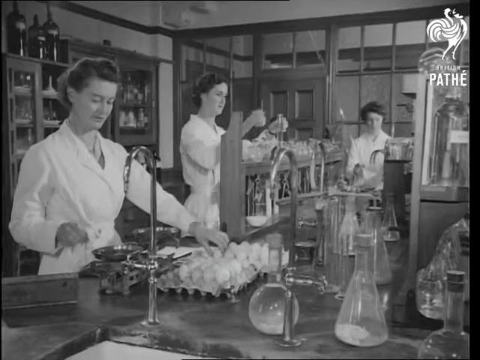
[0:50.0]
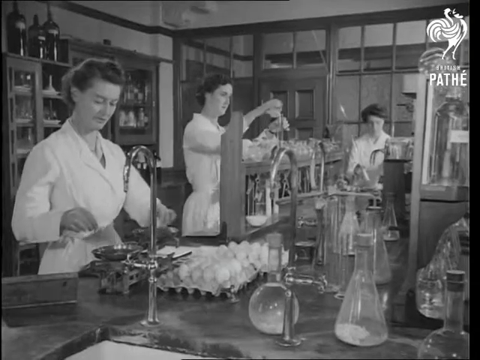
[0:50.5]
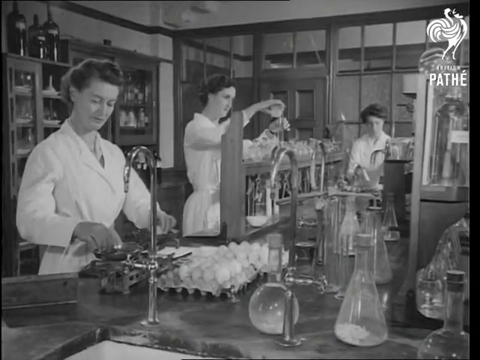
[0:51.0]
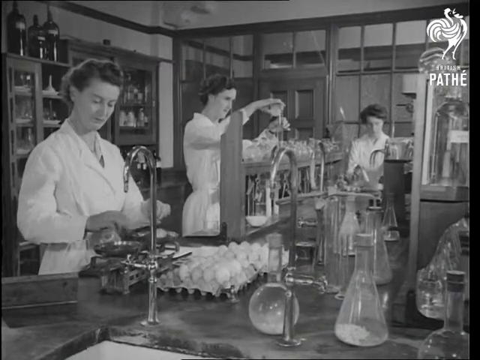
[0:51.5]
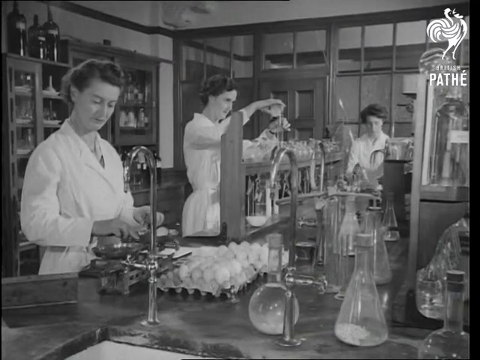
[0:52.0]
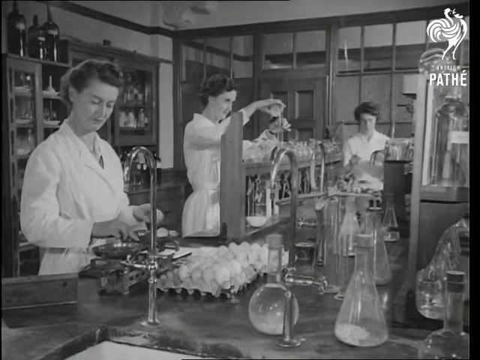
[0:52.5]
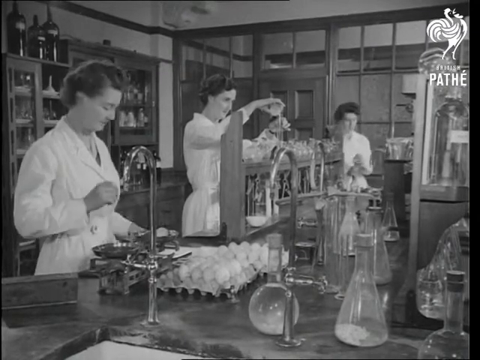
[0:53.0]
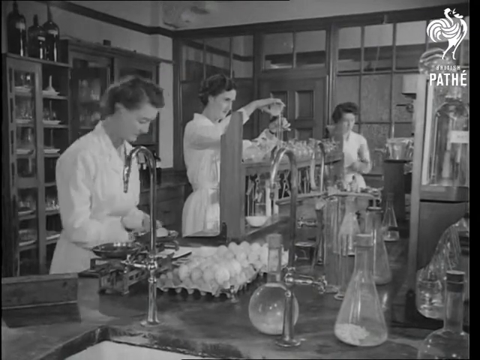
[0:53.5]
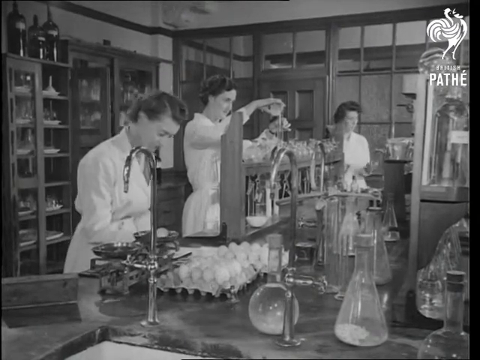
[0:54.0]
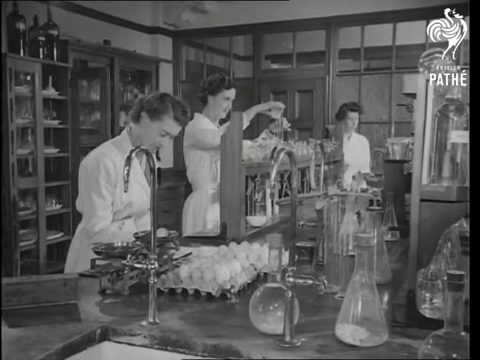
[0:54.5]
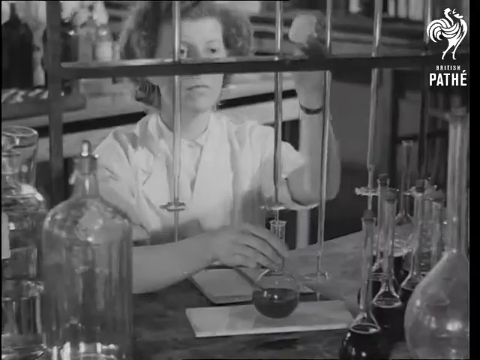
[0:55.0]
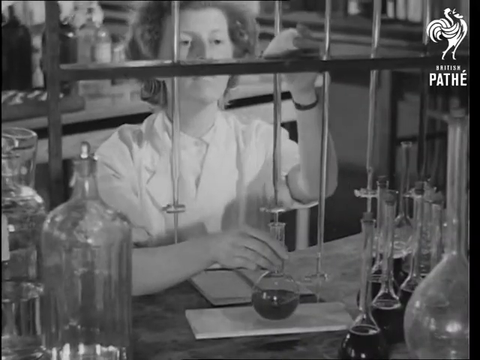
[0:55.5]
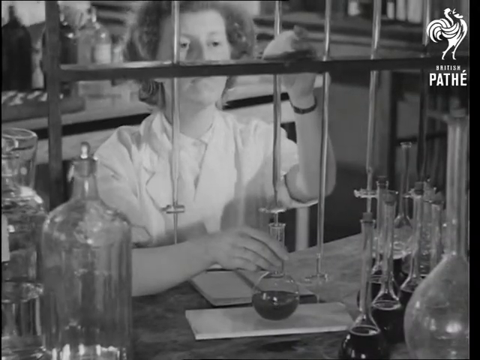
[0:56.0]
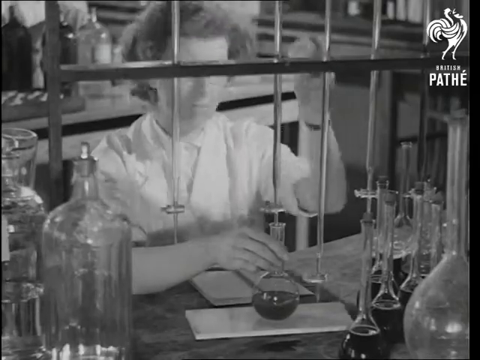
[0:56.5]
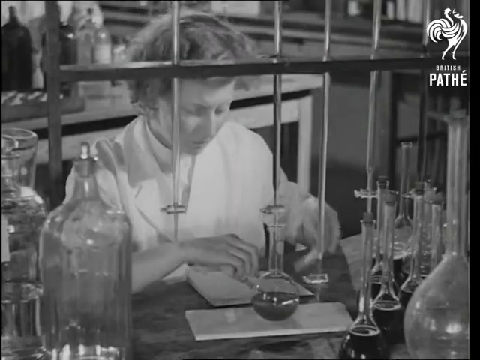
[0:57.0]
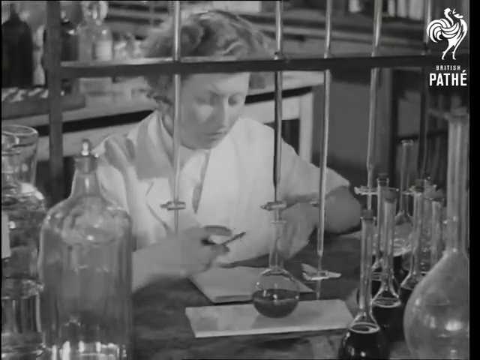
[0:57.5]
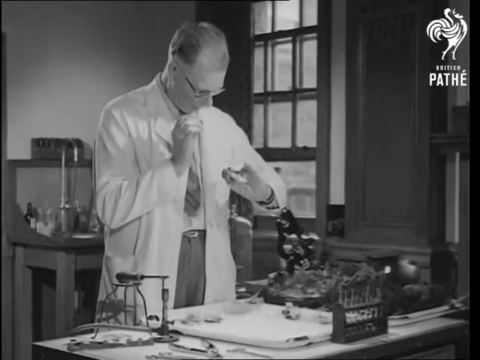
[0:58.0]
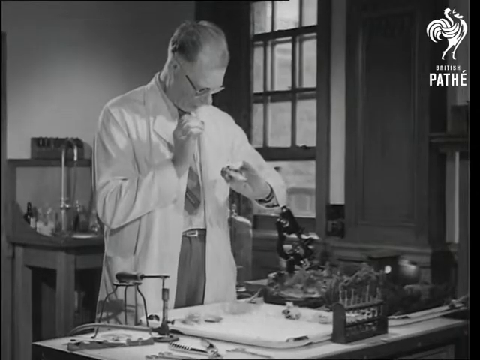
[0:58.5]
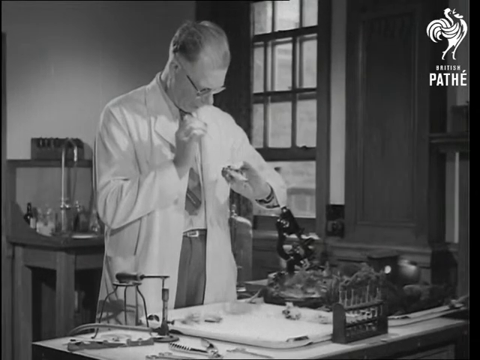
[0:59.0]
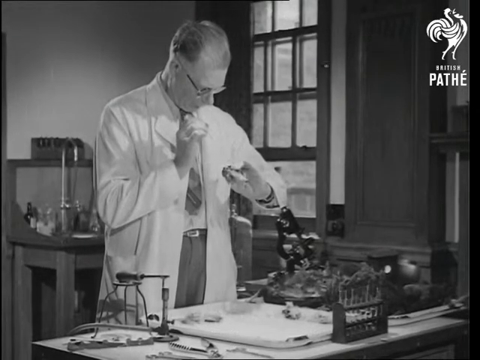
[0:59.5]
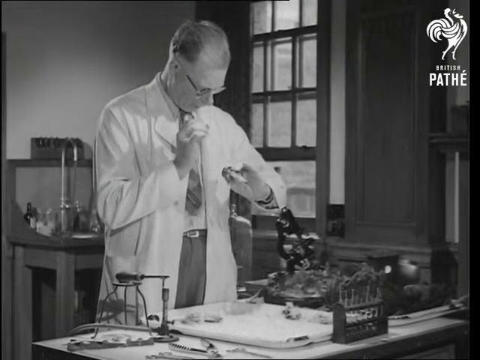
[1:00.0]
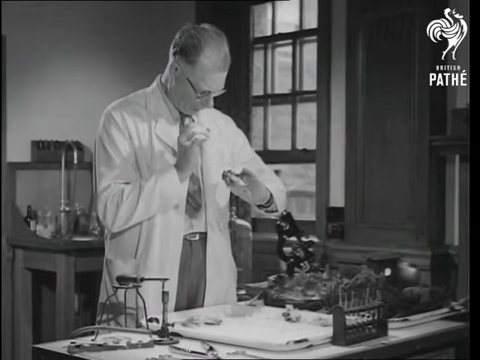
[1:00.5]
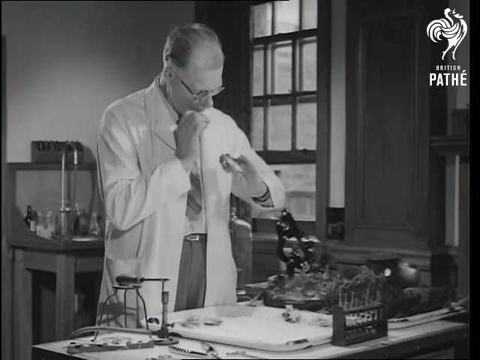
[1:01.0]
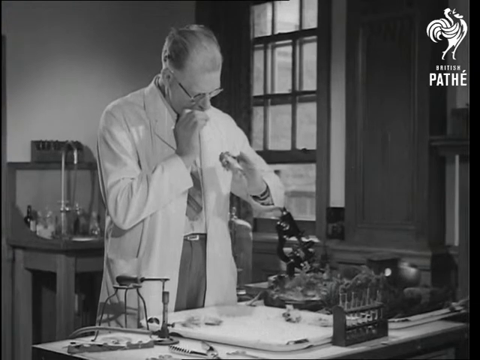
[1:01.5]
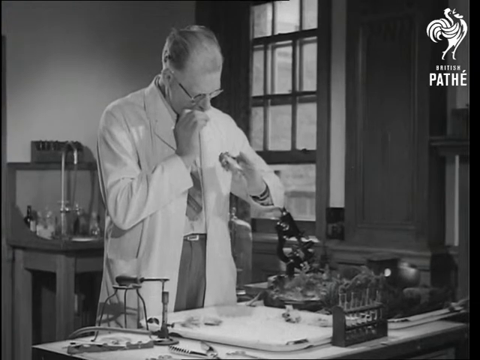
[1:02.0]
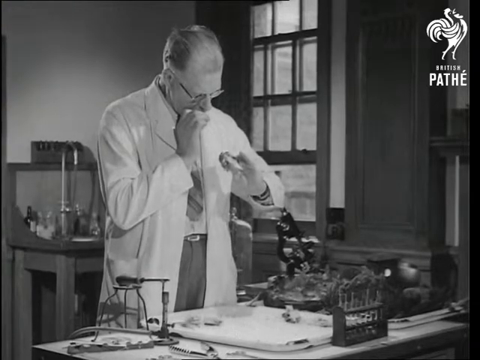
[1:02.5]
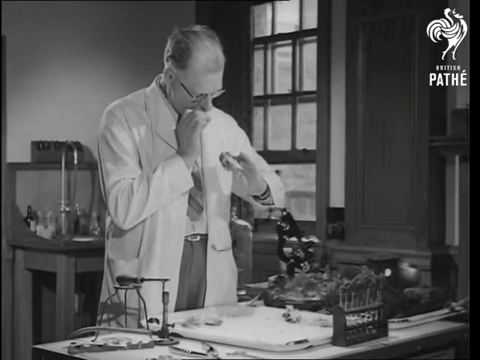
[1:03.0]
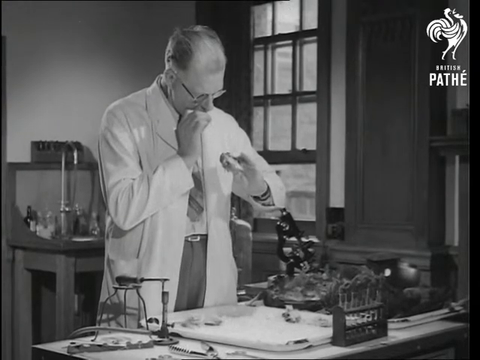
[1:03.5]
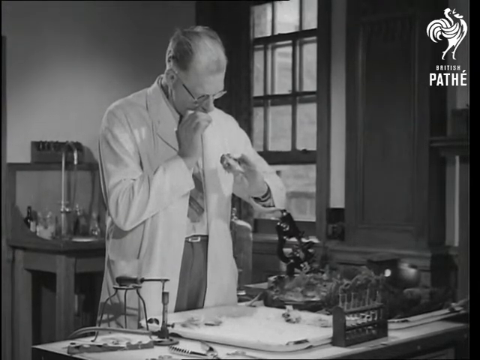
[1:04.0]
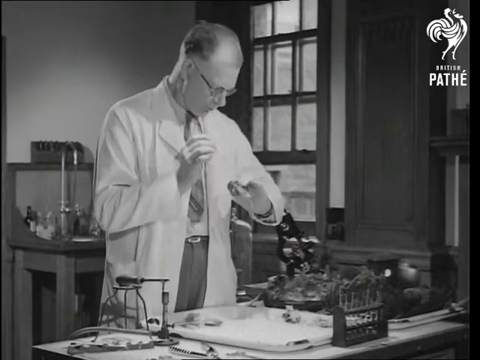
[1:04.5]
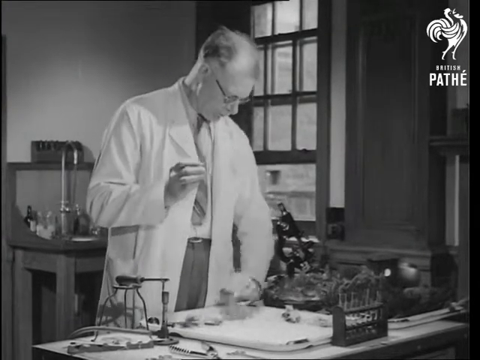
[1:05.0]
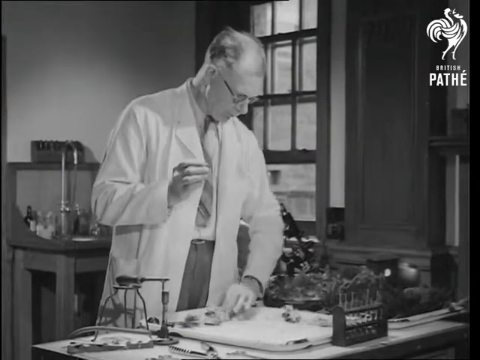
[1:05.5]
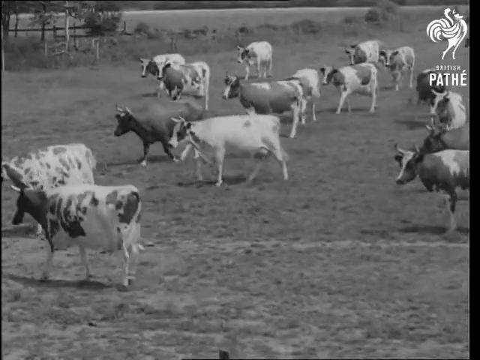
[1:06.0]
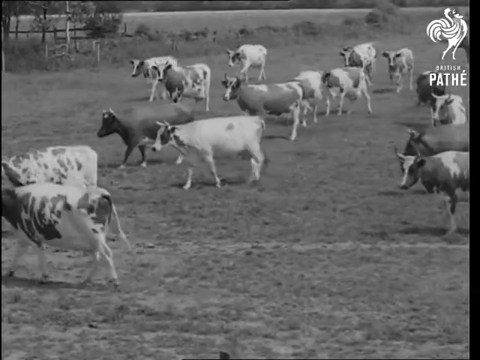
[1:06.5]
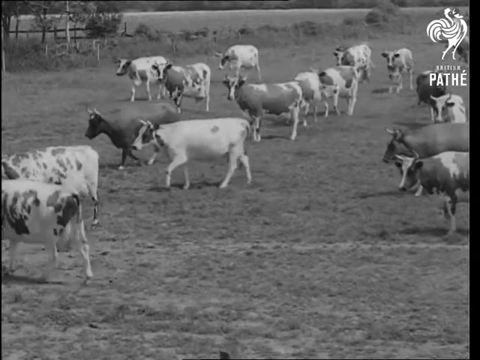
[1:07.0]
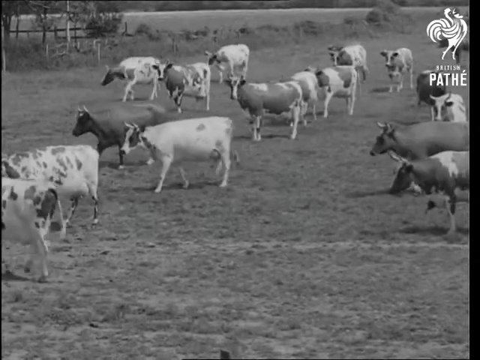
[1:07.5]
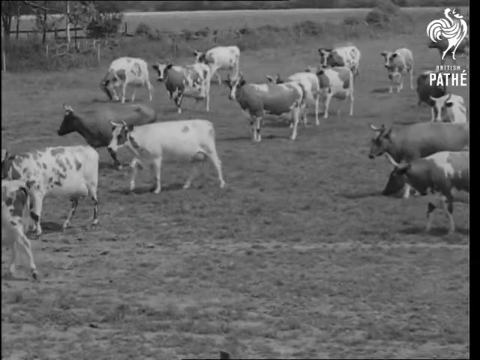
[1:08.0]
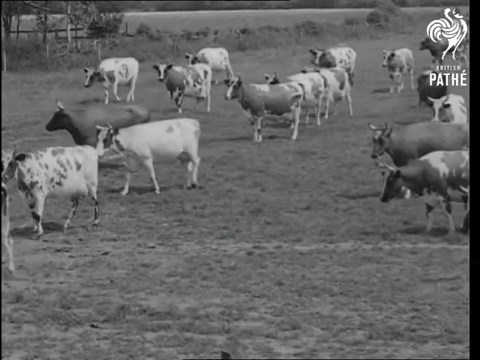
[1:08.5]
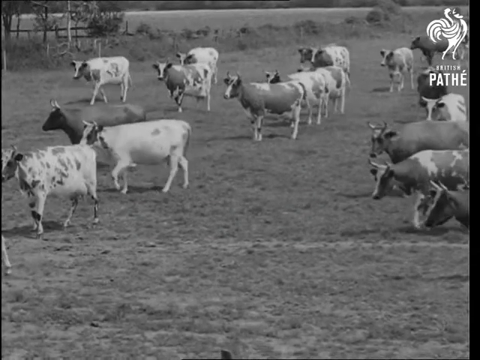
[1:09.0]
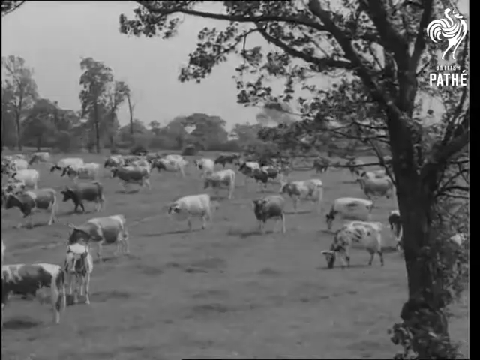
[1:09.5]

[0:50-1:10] Inside, three women in white are doing something with eggs. One woman stands in front of what looks like a faucet, with a carton of eggs. A woman next to her pours something into a glass cylinder, and another woman in the background is doing something that cannot be made out. There are many glass beakers around, and in the background there appear to be pantries with supplies. The footage cuts to a woman at a science lab setup measuring out a beaker of liquid. Everything is in black and white. A man in a white coat apparently has a microscope and is looking at something that cannot be identified; the picture is not totally clear. The scene then shows cows walking around in the grass, some black with white spots and some more white with black spots.